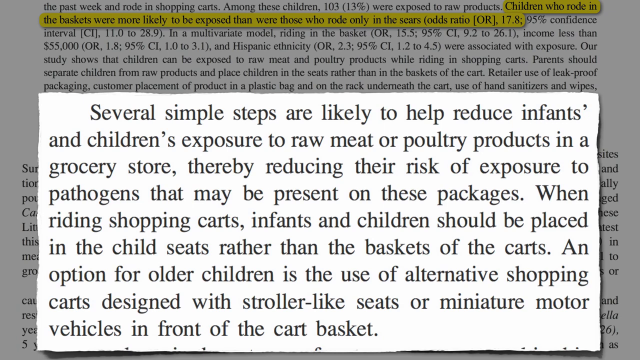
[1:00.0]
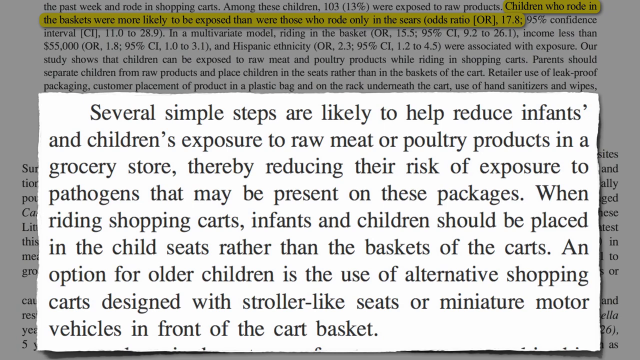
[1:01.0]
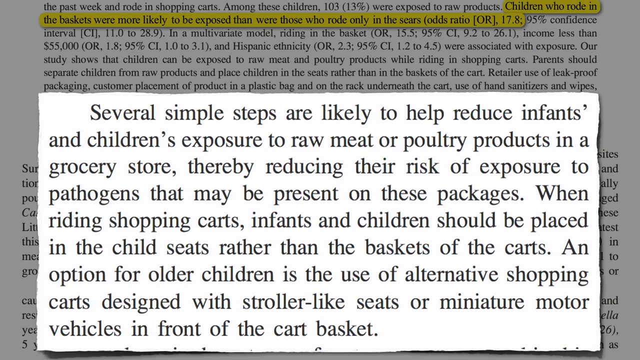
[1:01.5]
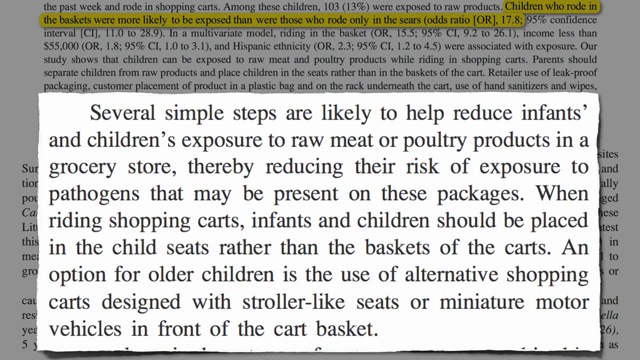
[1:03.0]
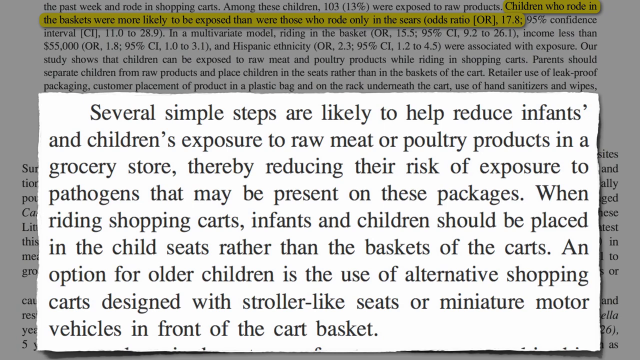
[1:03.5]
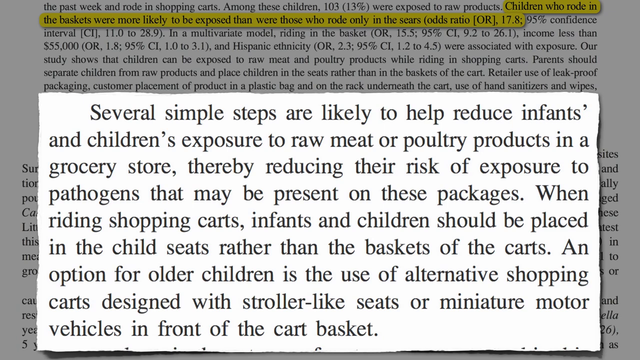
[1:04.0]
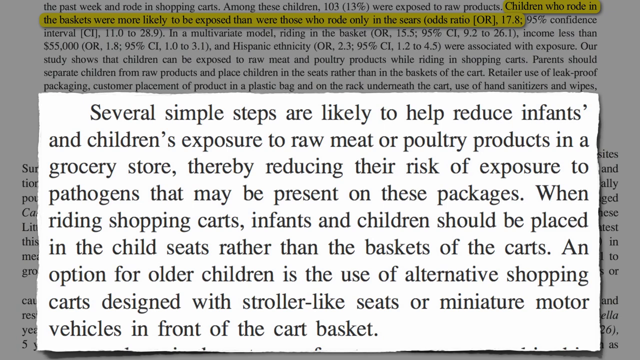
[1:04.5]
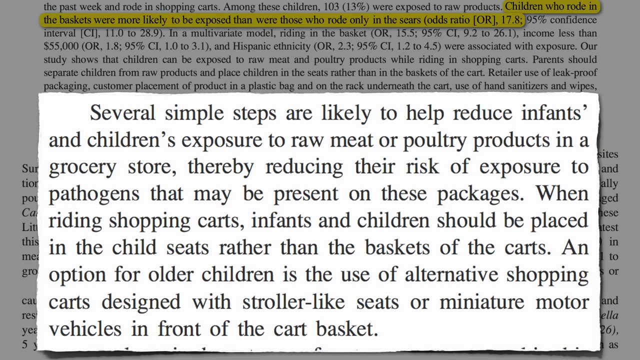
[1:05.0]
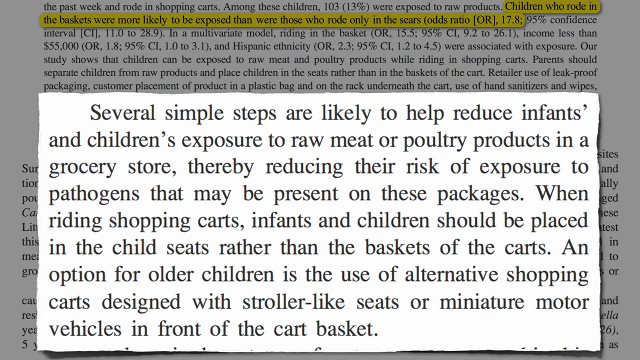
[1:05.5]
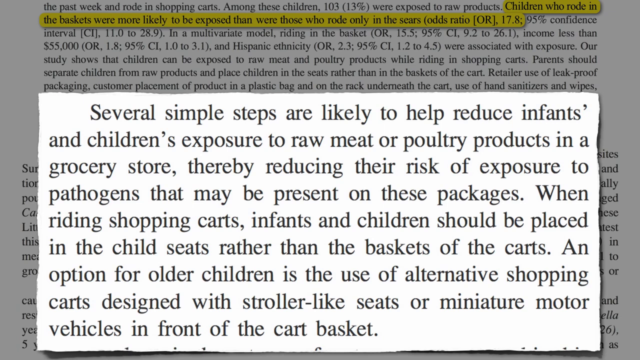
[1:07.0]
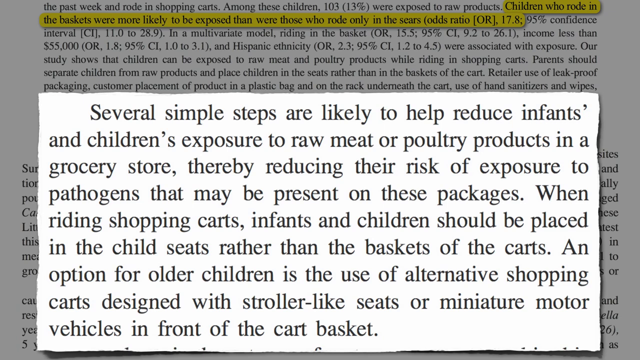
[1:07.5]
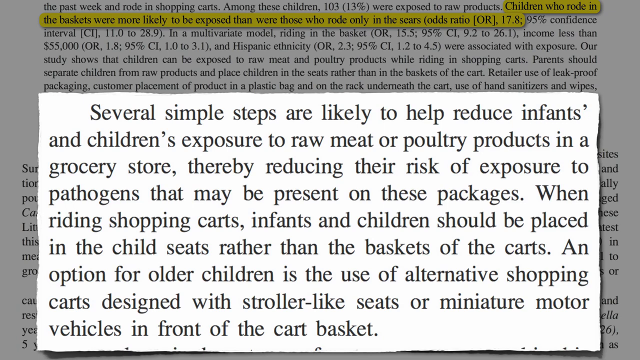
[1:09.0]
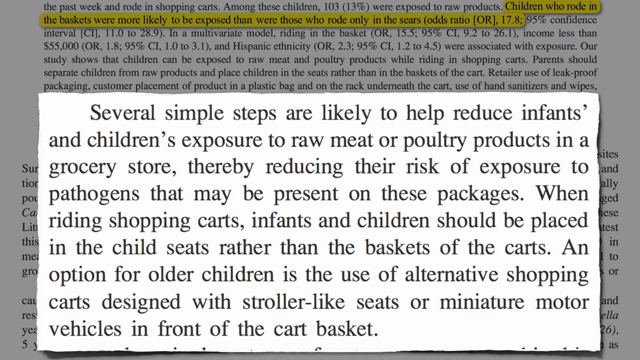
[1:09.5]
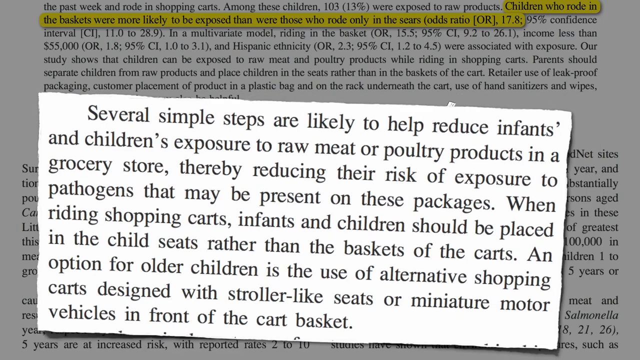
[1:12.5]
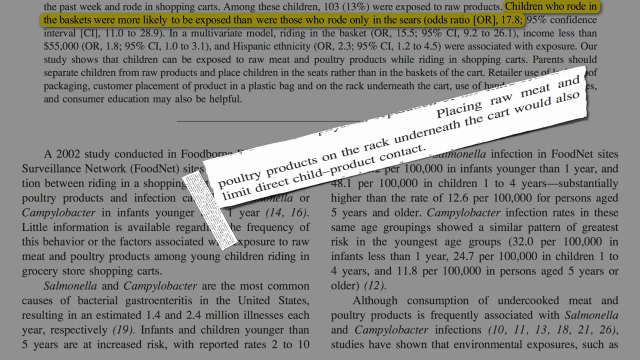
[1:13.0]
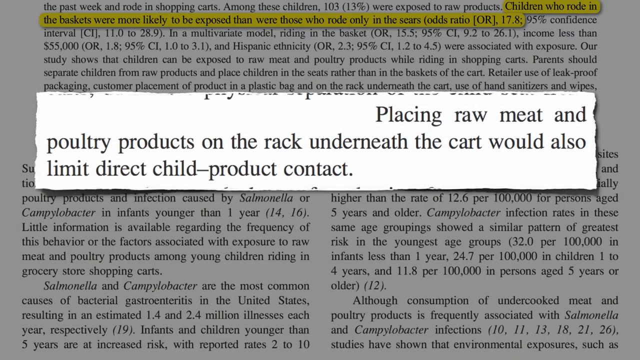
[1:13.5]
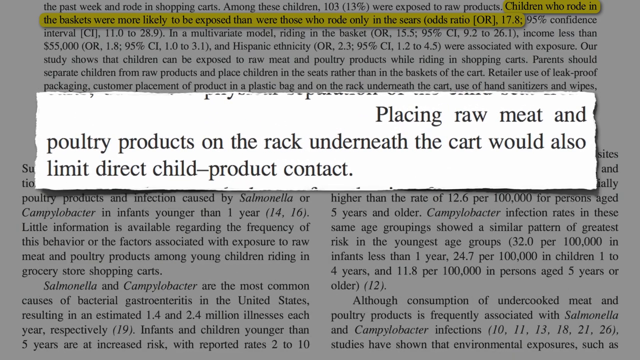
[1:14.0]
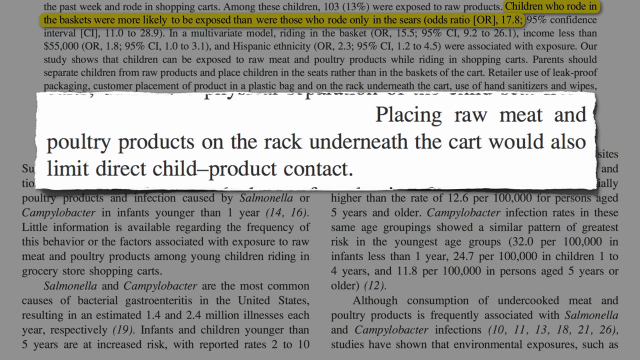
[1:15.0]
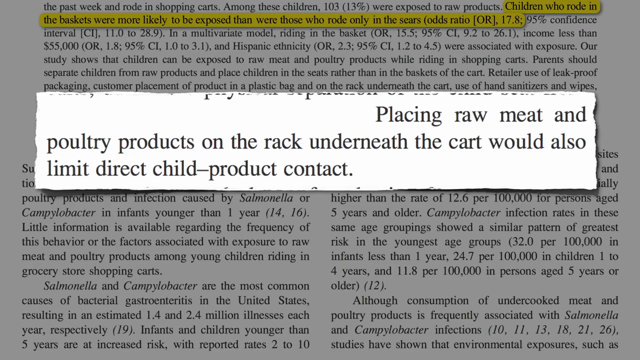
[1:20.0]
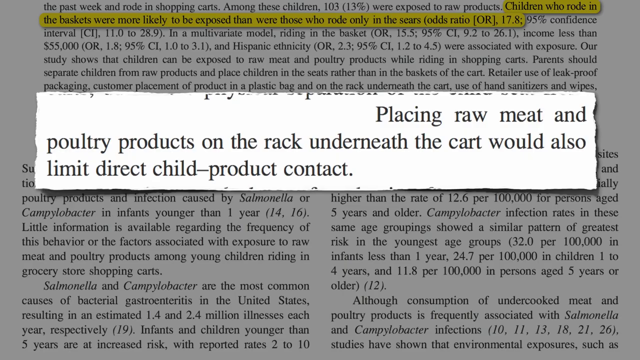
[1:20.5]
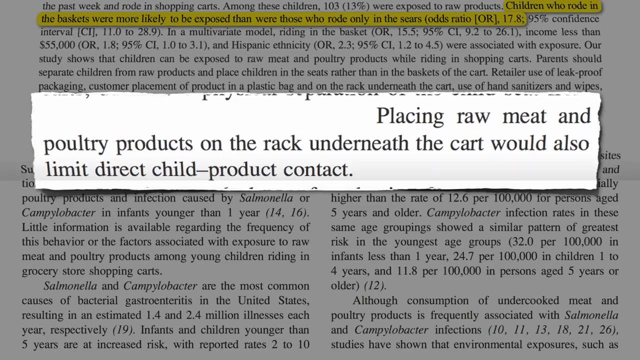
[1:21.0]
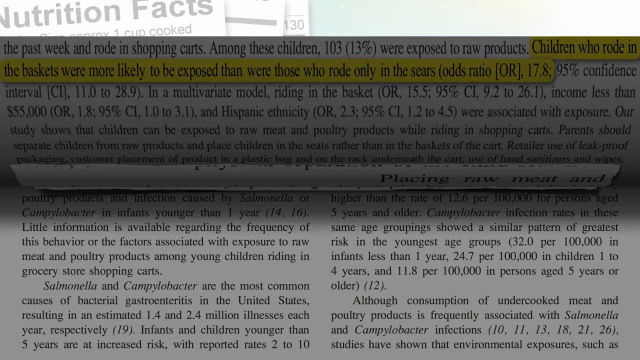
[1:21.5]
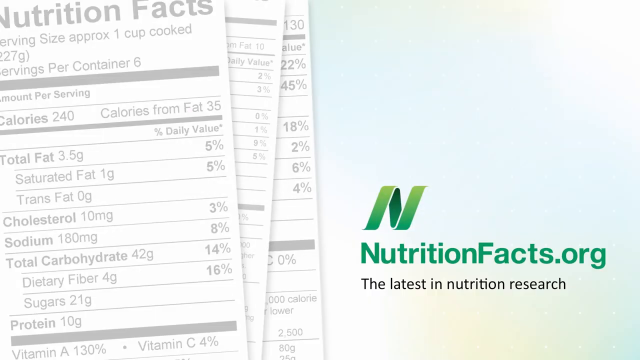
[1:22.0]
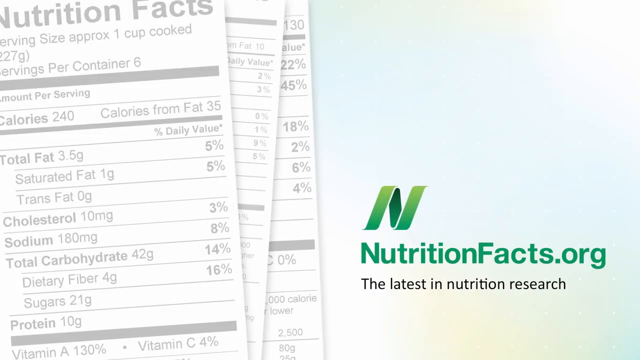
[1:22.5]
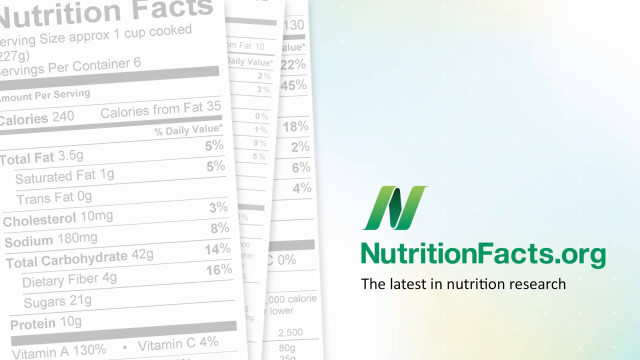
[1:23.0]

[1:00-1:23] A white, rectangular pop-up with black lettering reads: "Several simple steps are likely to help reduce infants and children's exposure to raw meat or poultry products in a grocery store, thereby reducing the risk of exposure to pathogens that may be present on these packages. When riding shopping carts, infants and children should be placed in the child seat rather than the baskets of the carts. An option for older children is the use of alternative shopping carts designed with stroller-like seats or miniature motor vehicles in front of the cart basket." along with "Thank you for watching." The video stays static on this for a while, then another pop-up on a white rectangular background reads "placing raw meat and poultry products on the rack underneath the cart would also limit direct child product contact." The page then folds down, like folding the page of a book, from the top of the screen toward the bottom, revealing the Nutrition Facts page again: three nutrition facts labels stacked on top of each other in a sort of spread-out manner on the left side of the screen, and on the right side "nutritionfacts.org" in green with "the latest in nutrition research" in black underneath.